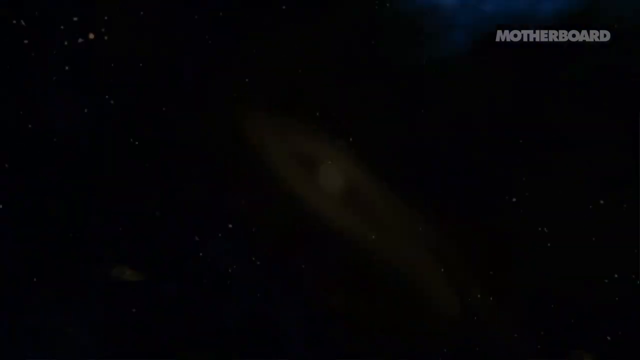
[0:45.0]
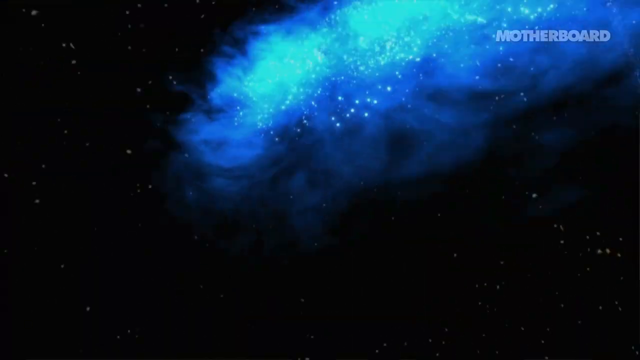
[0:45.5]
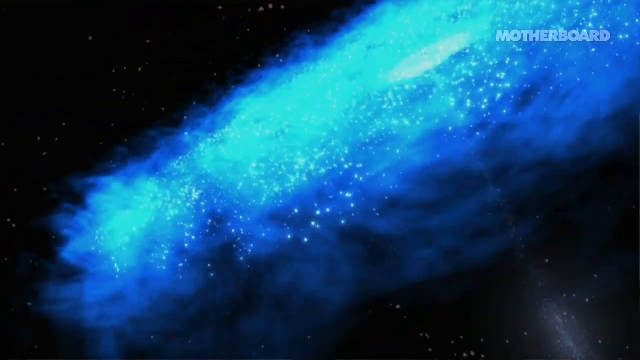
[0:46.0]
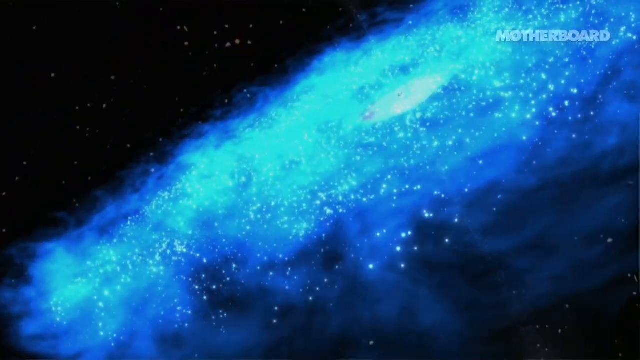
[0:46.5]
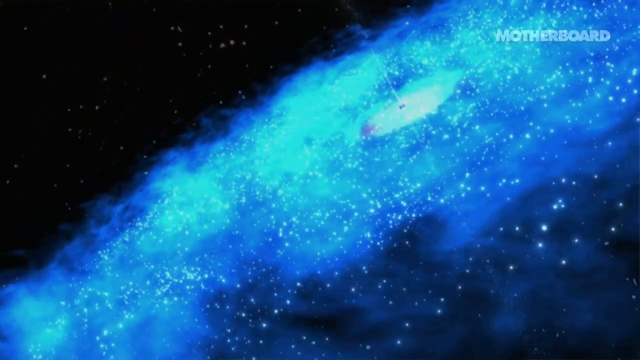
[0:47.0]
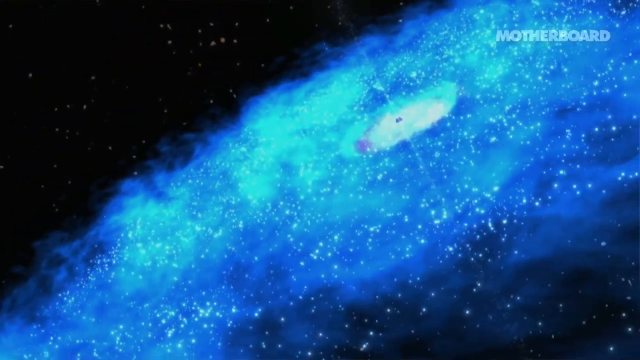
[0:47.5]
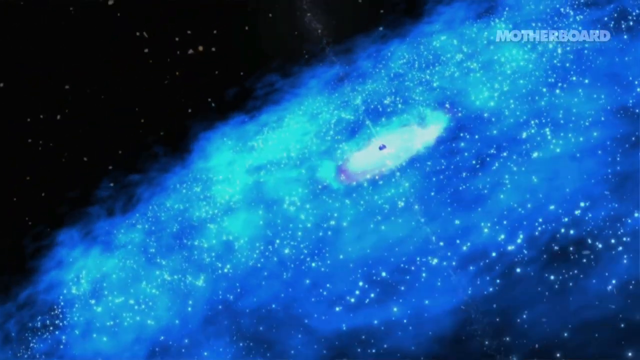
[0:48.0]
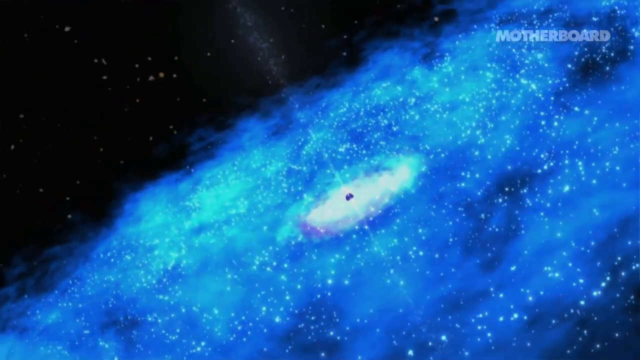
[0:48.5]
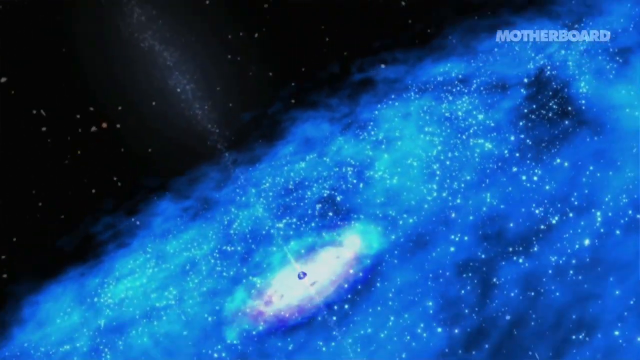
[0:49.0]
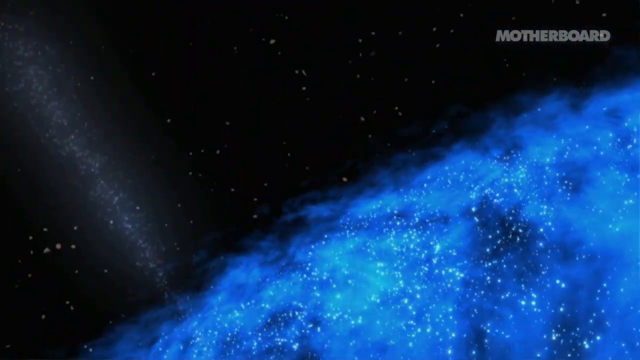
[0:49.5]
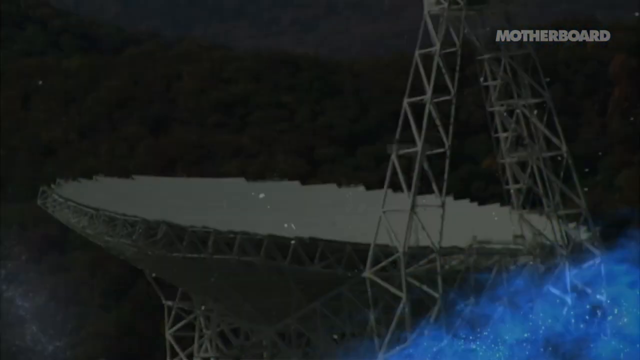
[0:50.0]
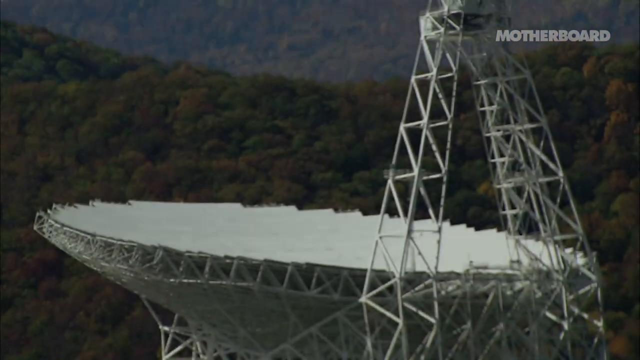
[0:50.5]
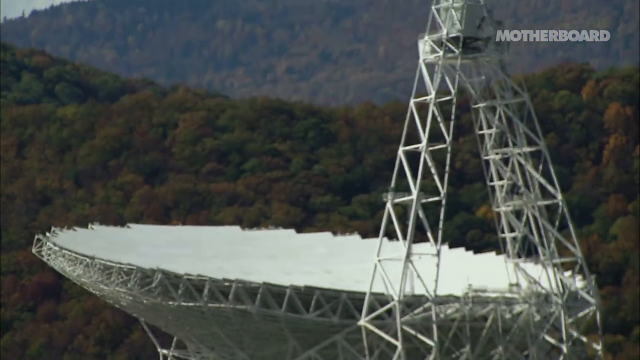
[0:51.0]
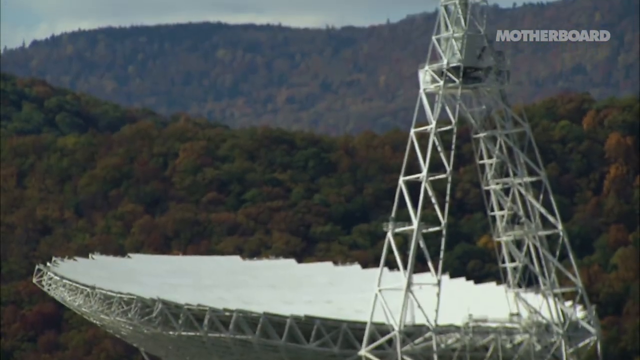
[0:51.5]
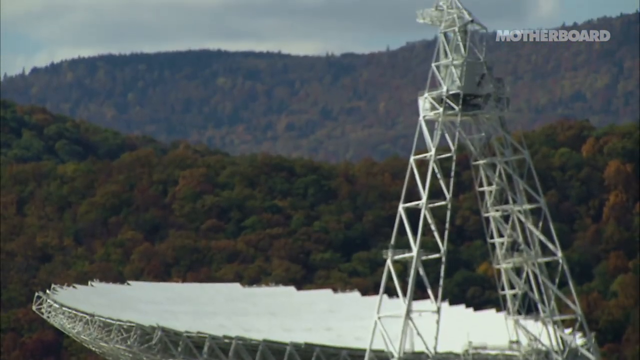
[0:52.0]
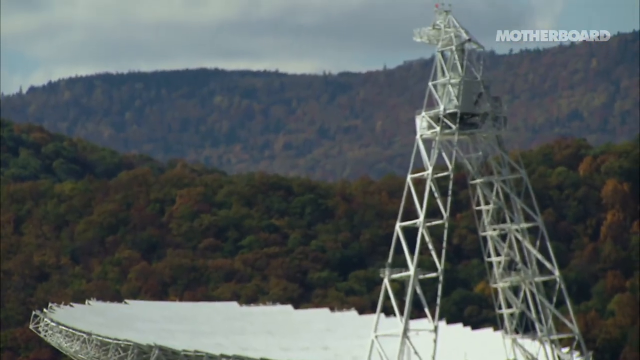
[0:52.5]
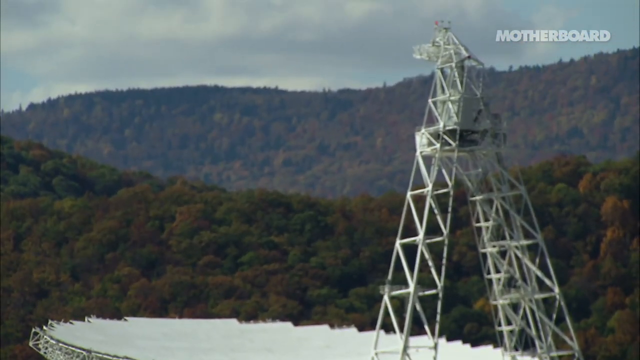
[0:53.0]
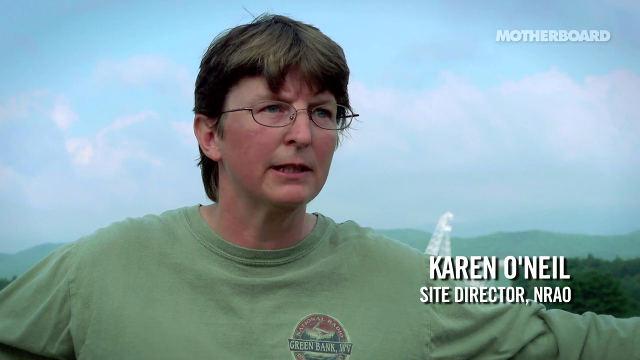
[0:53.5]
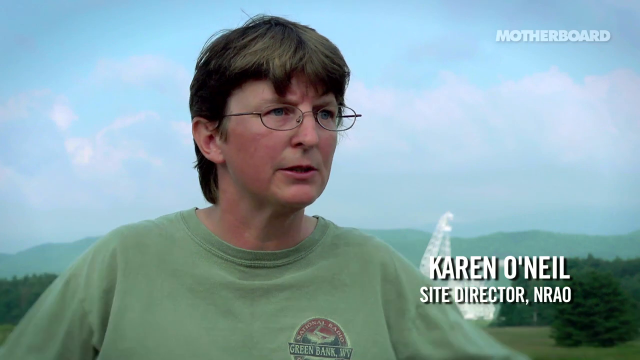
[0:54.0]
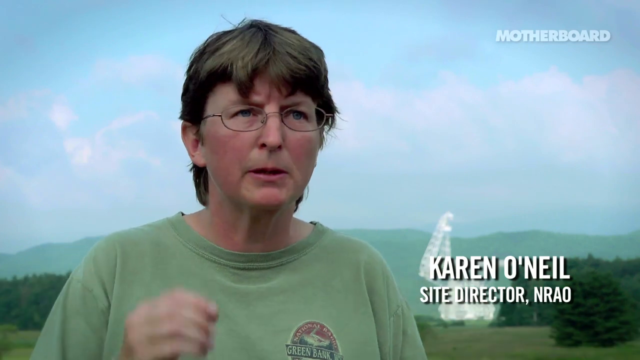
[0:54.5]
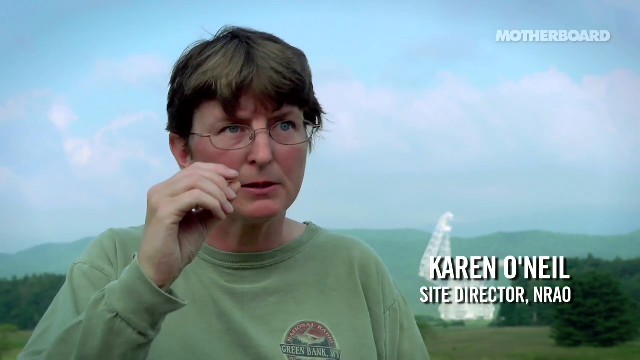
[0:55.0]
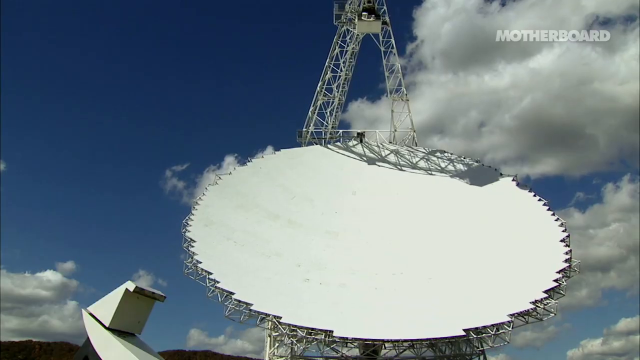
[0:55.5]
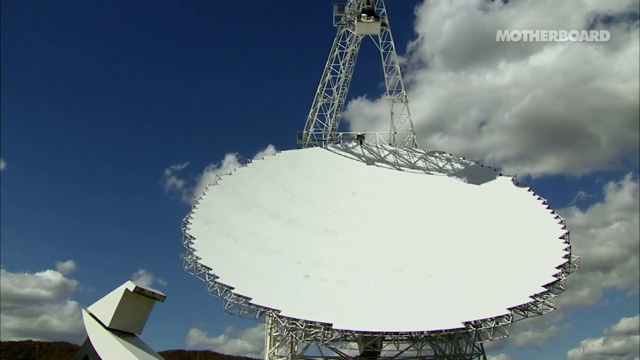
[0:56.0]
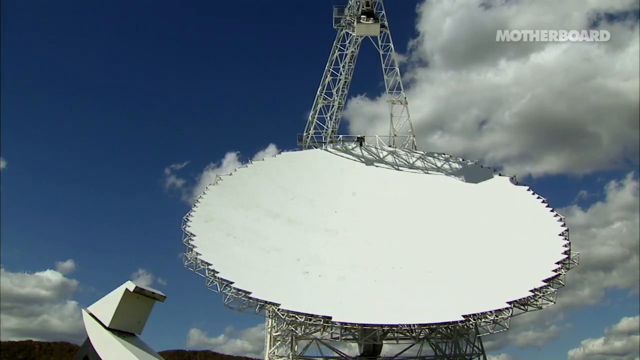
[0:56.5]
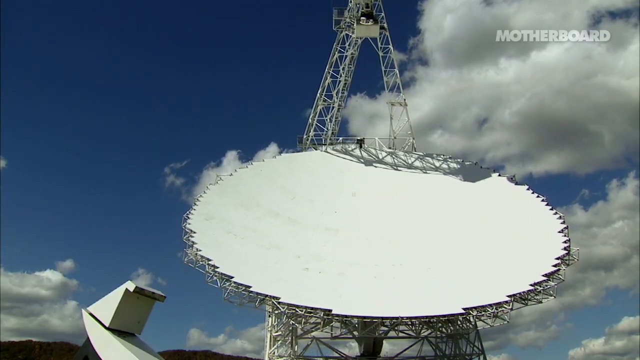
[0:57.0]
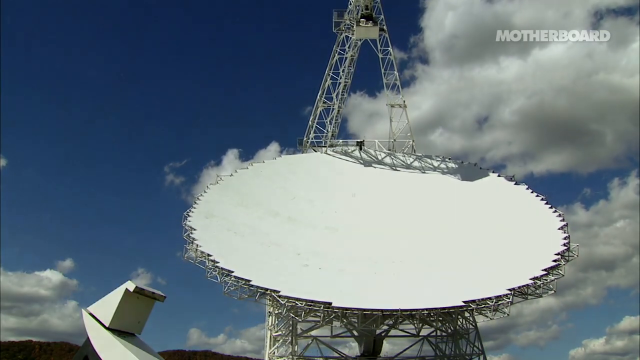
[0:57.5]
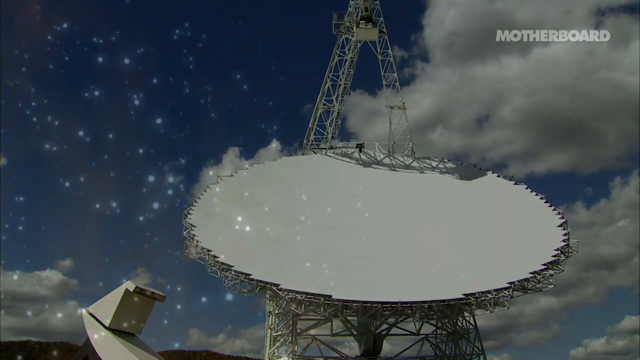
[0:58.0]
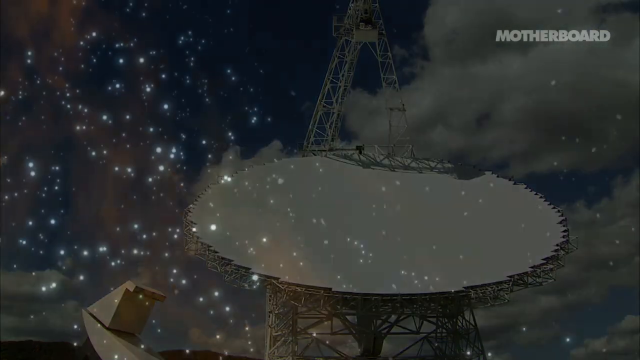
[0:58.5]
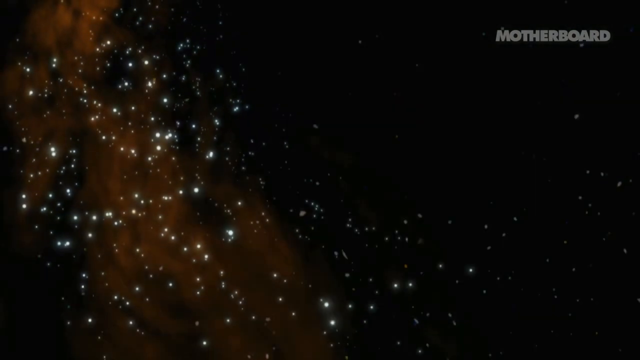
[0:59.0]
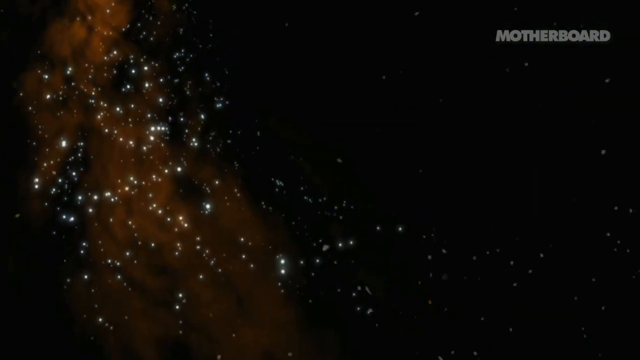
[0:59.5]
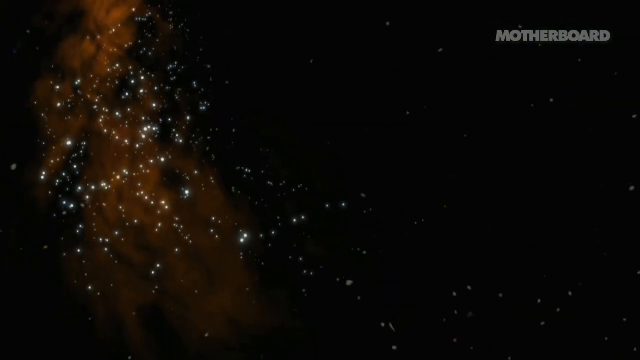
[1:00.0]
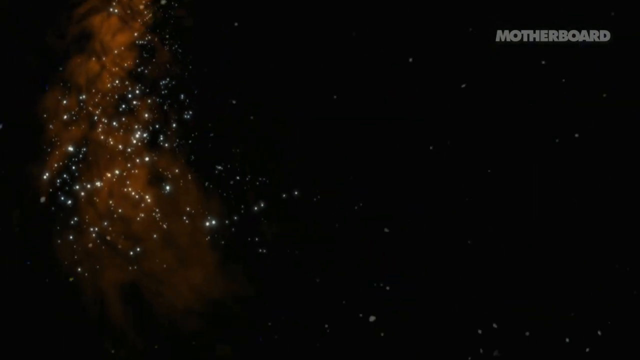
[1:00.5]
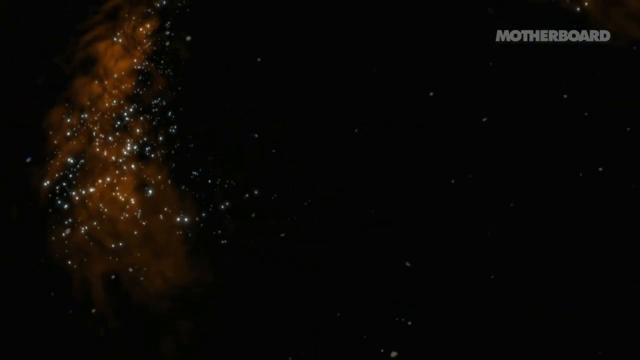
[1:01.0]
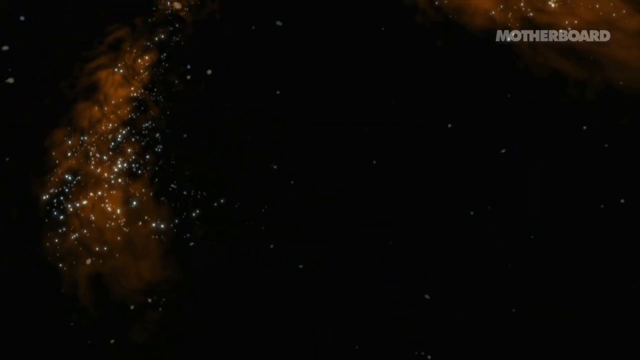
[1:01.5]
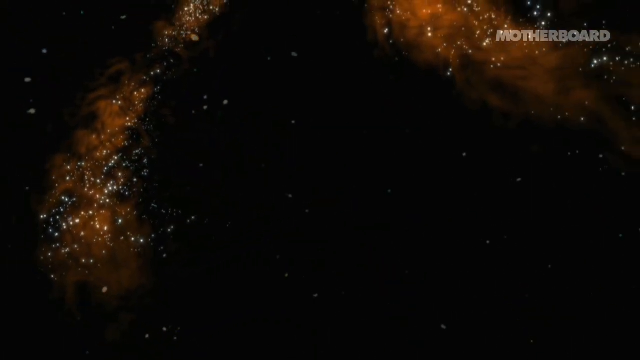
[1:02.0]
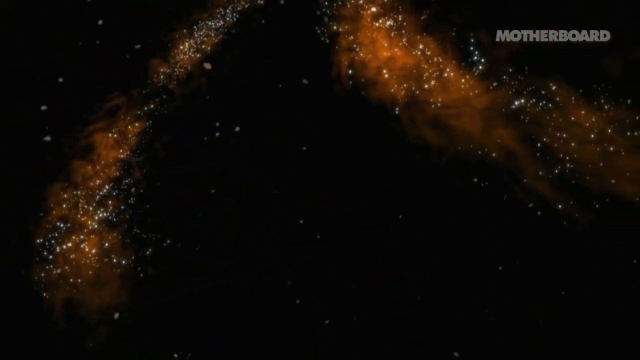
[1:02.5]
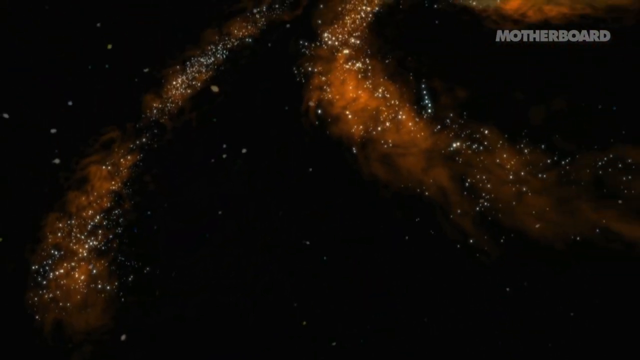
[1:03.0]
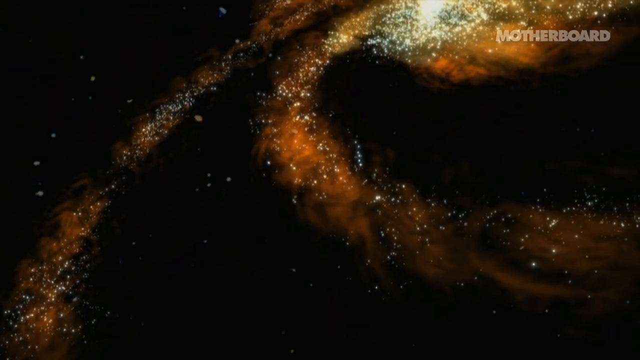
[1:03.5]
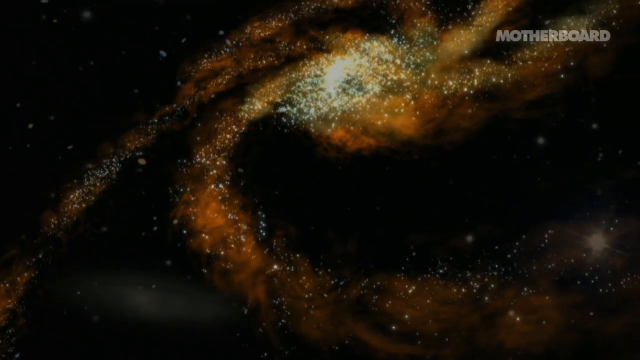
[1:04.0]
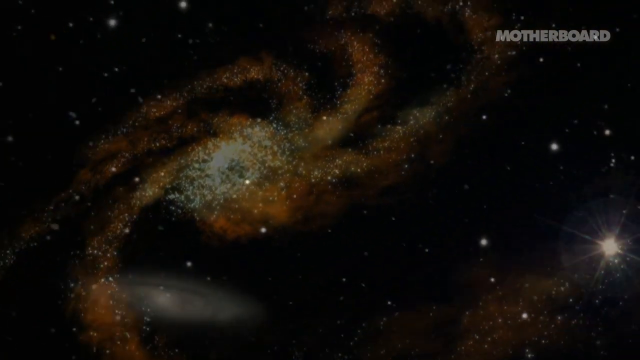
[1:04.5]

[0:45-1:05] An effect of what looks like swirling gas in outer space appears. Then the terrestrial satellite dish is shown against a backdrop of thick green forest with lots of trees. A woman is briefly shown; she looks like she is describing something. She has short hair, wears glasses and an olive green t-shirt. Next, the large terrestrial satellite dish is seen from its front view: very tall and cylindrical, whitish in color, with an antenna tower attached, against a blue sky with white clouds on a clear day.